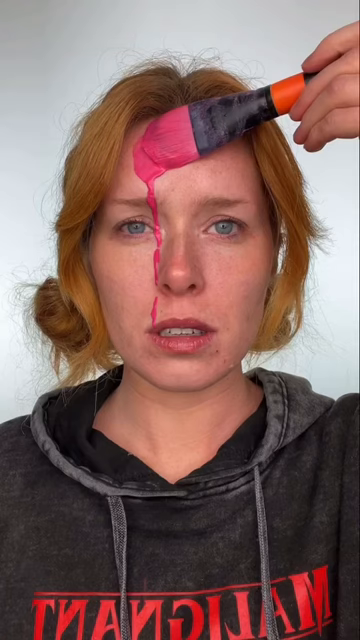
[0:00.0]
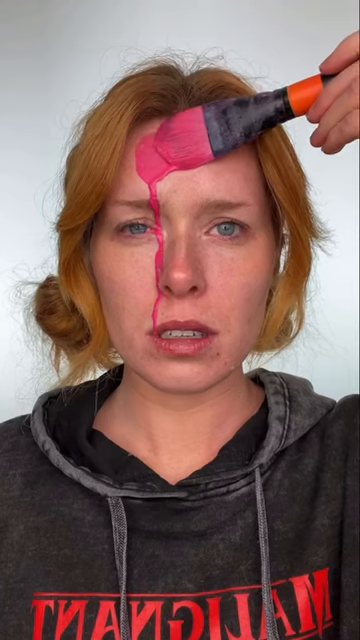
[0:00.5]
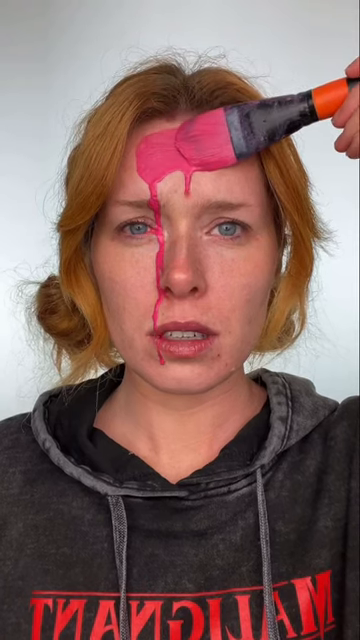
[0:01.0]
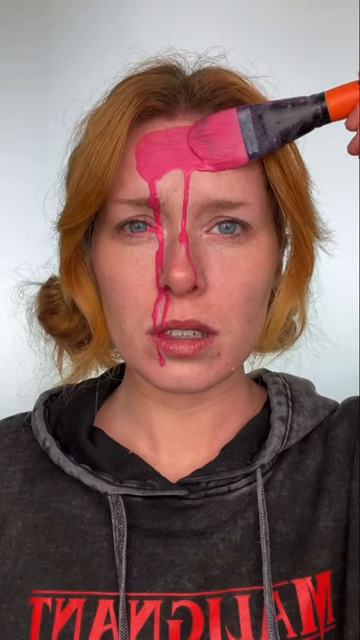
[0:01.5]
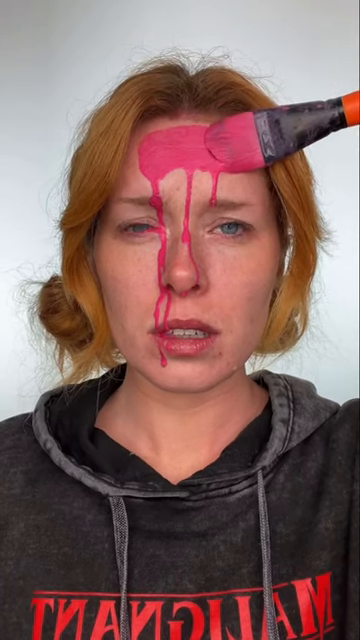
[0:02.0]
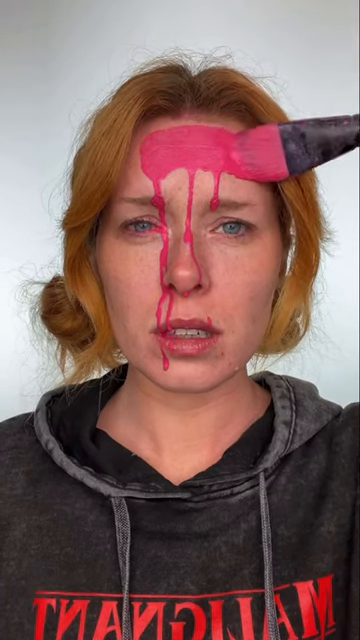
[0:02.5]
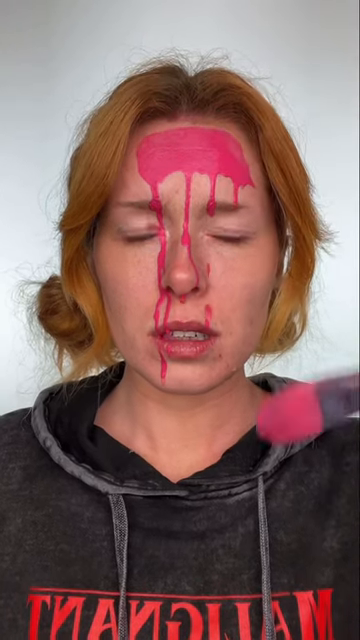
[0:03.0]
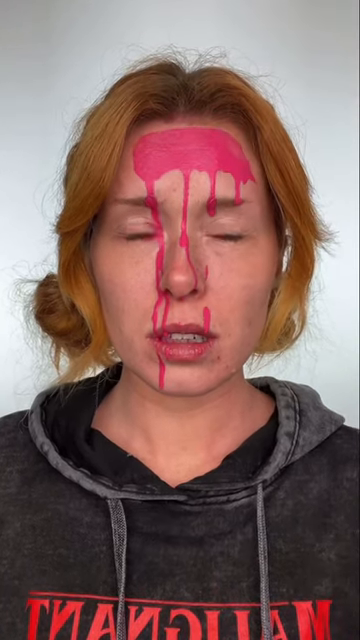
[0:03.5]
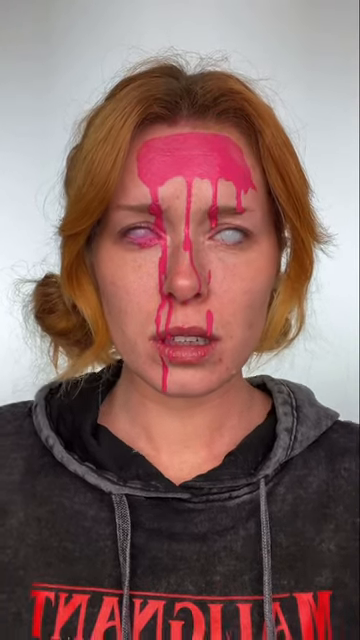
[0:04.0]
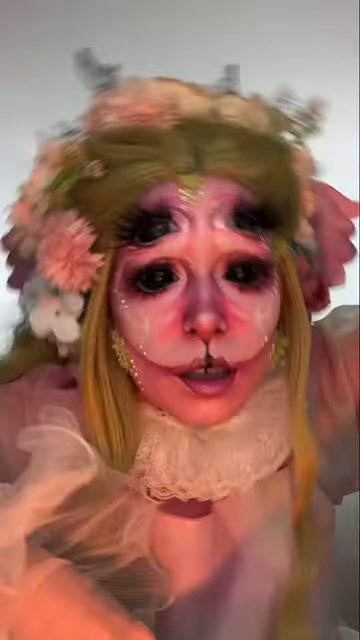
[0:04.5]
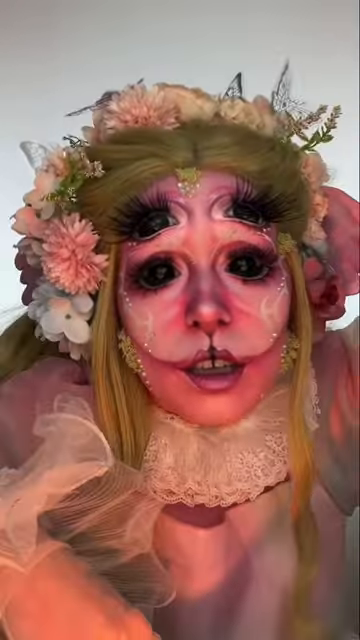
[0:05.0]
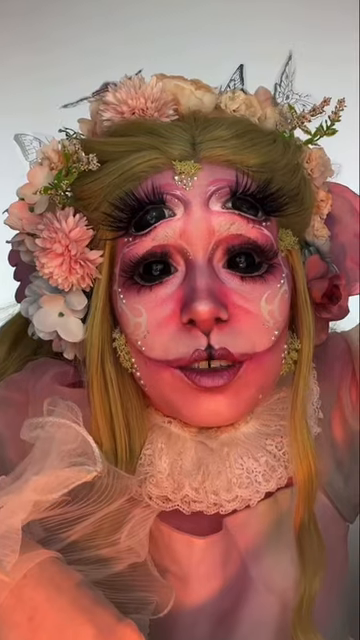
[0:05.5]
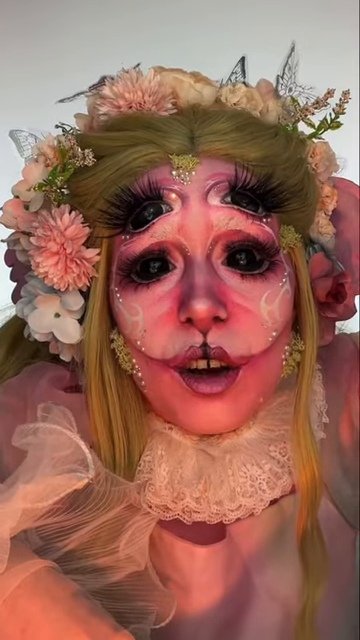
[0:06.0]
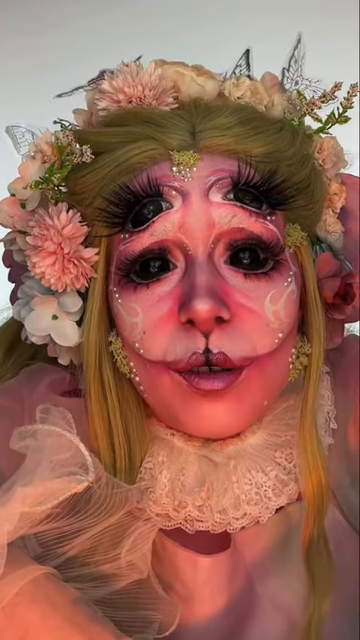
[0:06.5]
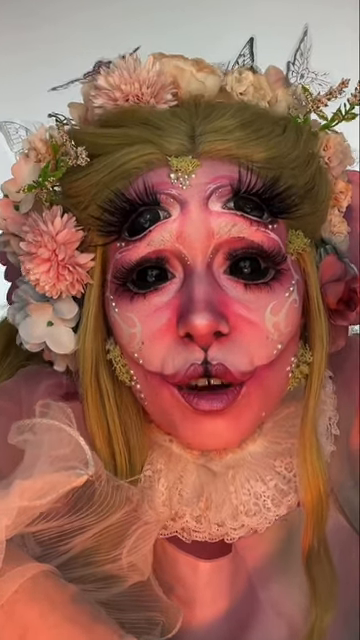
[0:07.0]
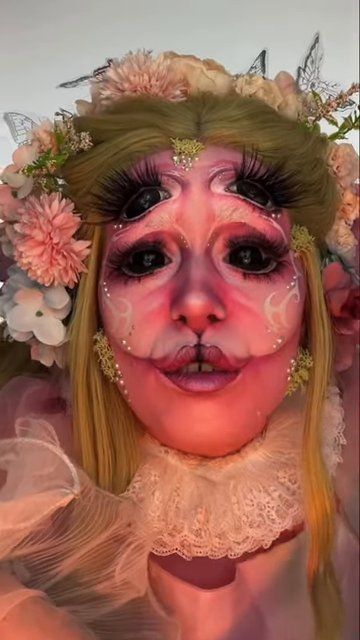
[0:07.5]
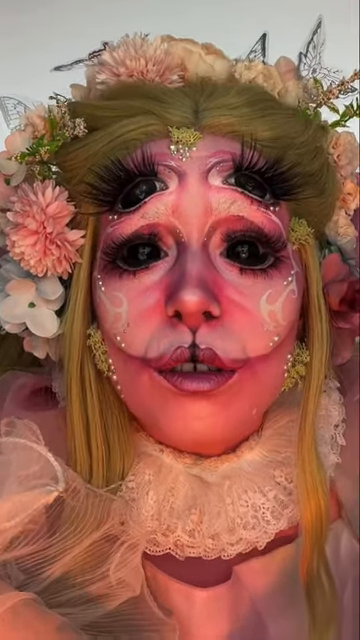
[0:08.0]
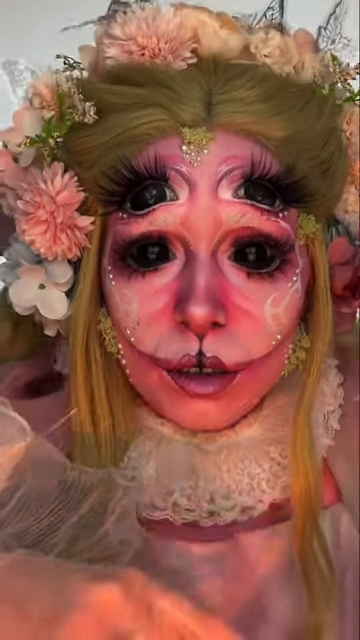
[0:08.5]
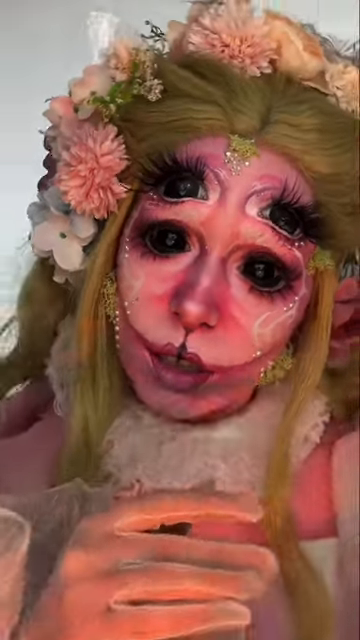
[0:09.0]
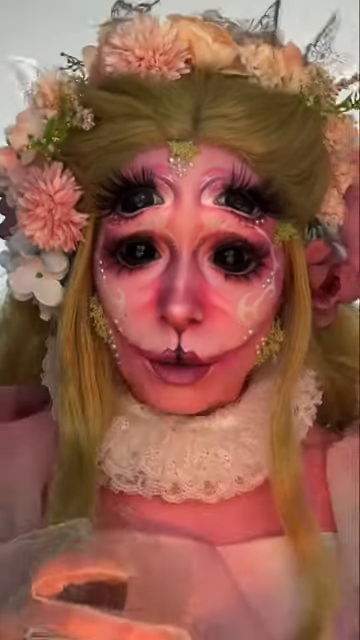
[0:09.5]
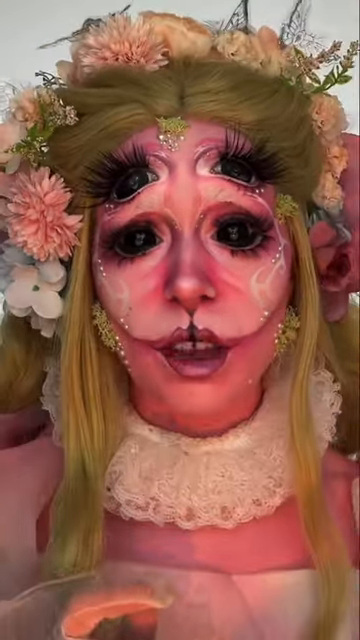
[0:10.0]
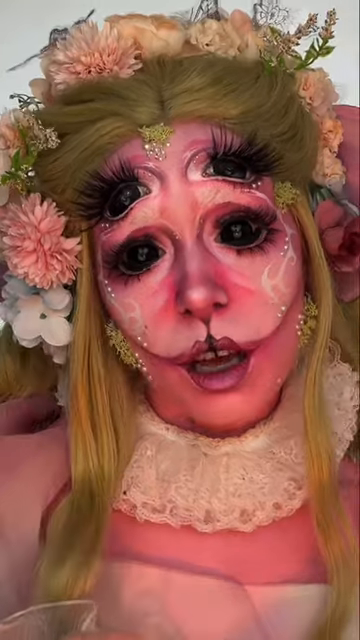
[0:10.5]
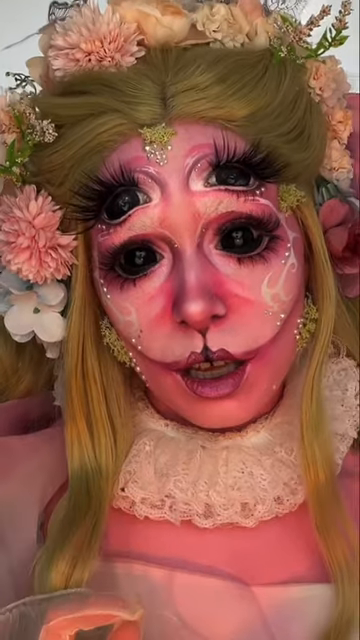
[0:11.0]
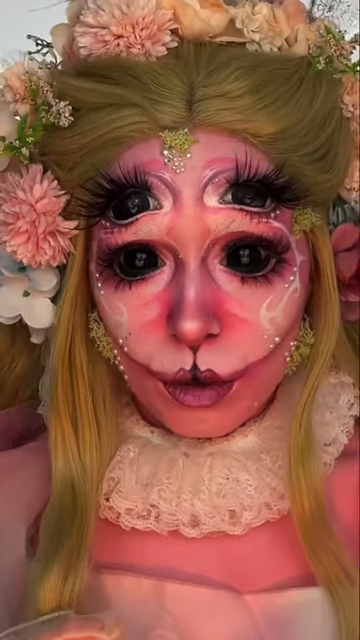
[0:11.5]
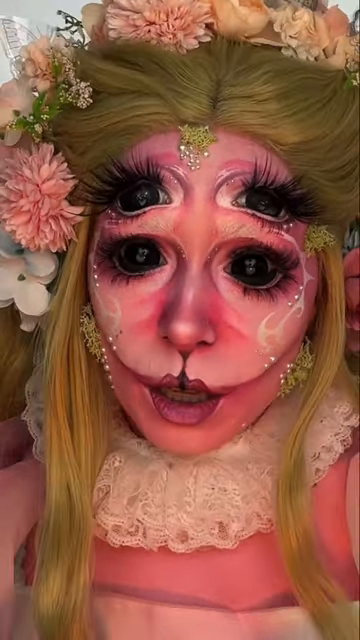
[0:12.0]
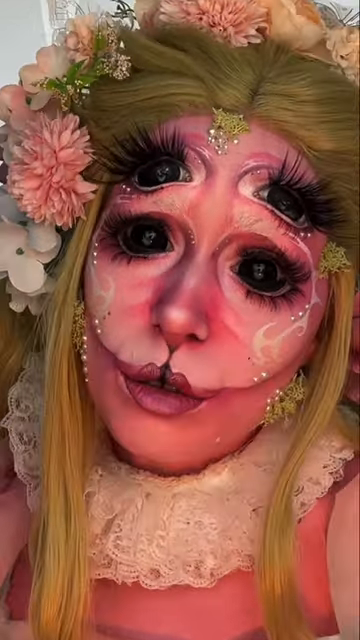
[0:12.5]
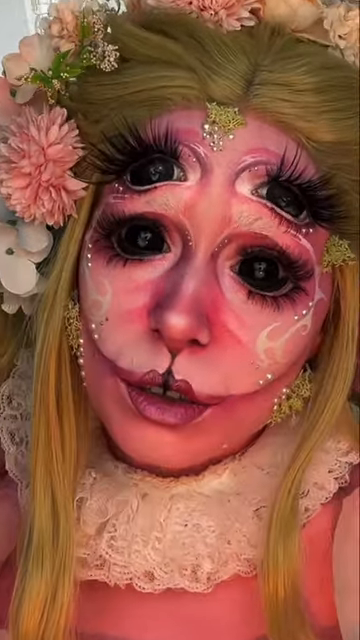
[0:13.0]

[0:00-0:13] The video is from the channel Holly Mary Makeup, and on-screen text reads "Melanie Martinez Portals Inspired Mask." A girl puts pink makeup on her face. She has made some sort of mask with makeup, apparently a cosplay, featuring big black eyes and two sets of eyes. She has blonde hair with flowers in it, and flowers around the mask. The process of making the mask is not shown. She says something into the camera and moves in a very robotic-like way.